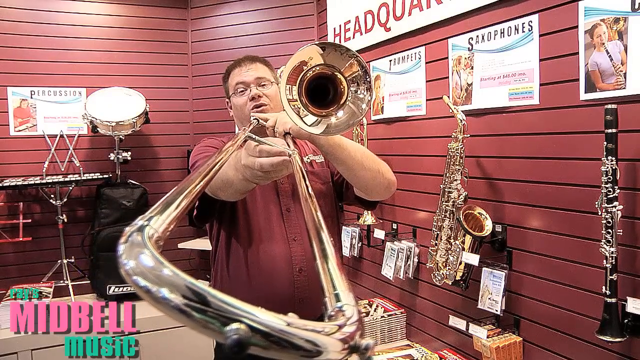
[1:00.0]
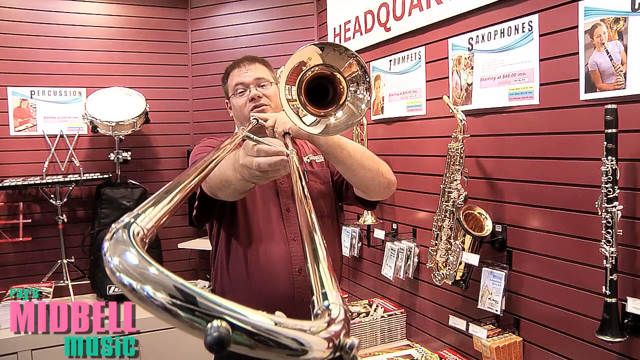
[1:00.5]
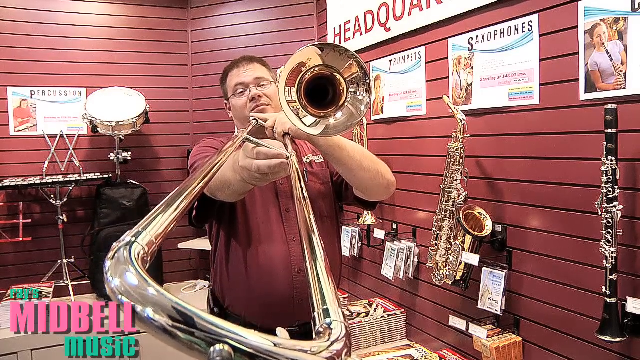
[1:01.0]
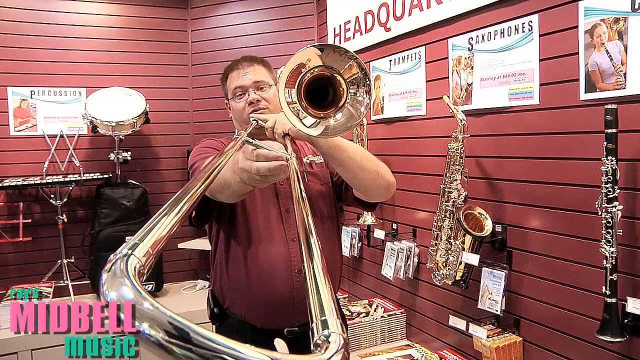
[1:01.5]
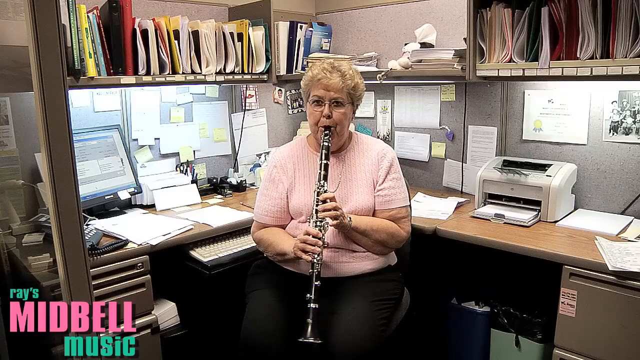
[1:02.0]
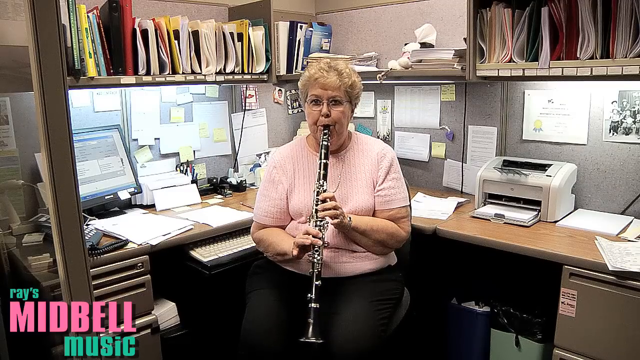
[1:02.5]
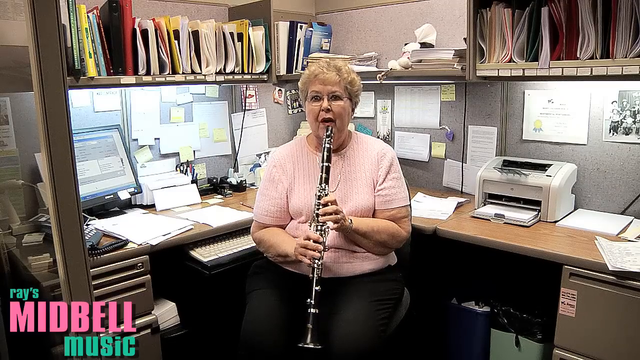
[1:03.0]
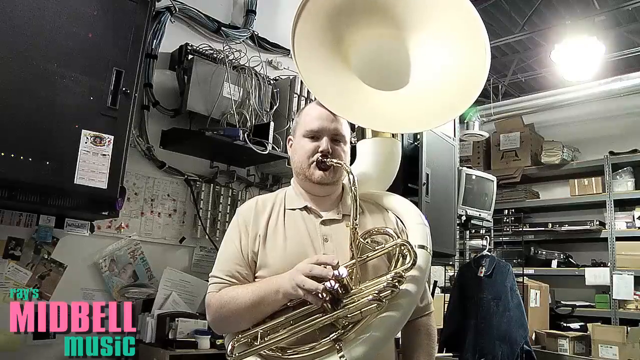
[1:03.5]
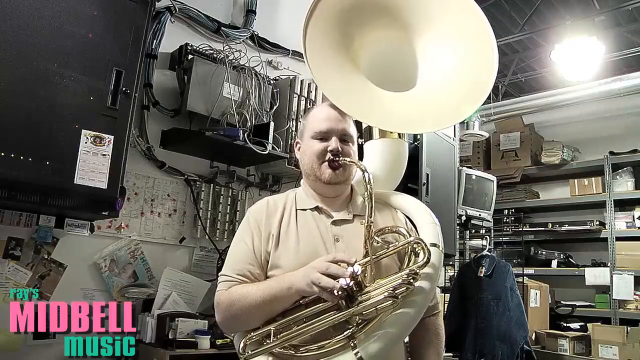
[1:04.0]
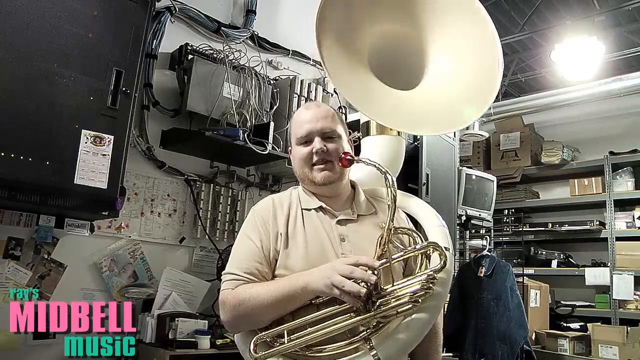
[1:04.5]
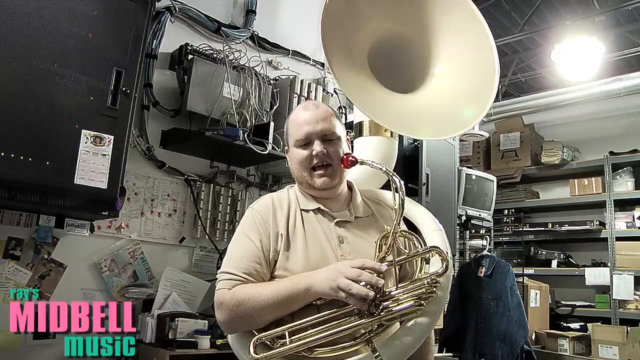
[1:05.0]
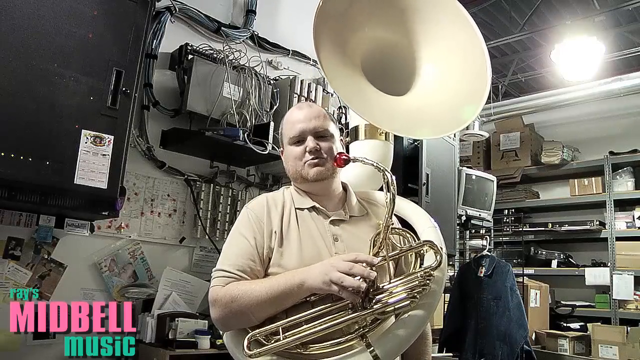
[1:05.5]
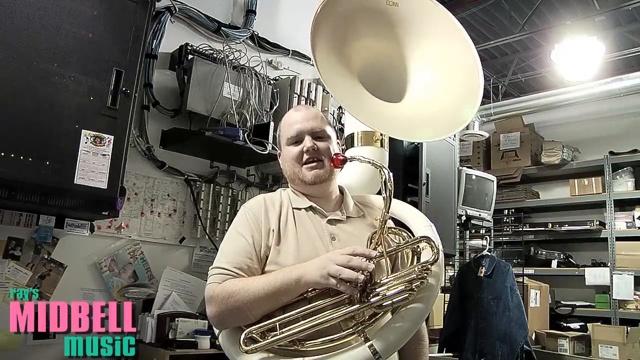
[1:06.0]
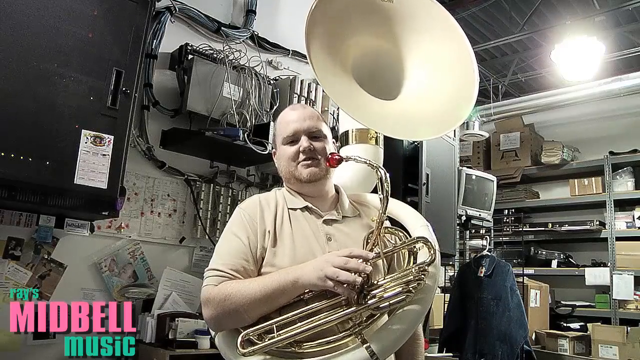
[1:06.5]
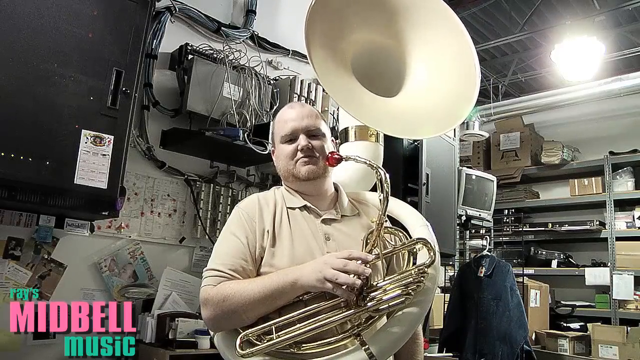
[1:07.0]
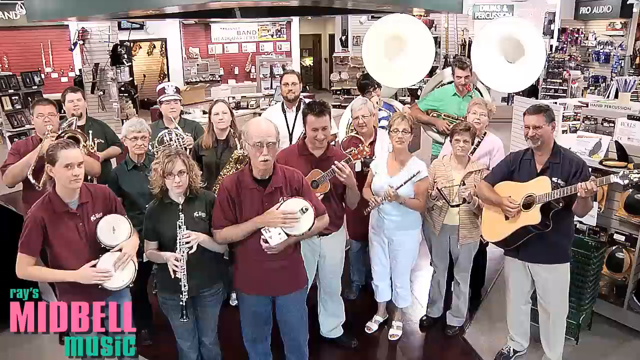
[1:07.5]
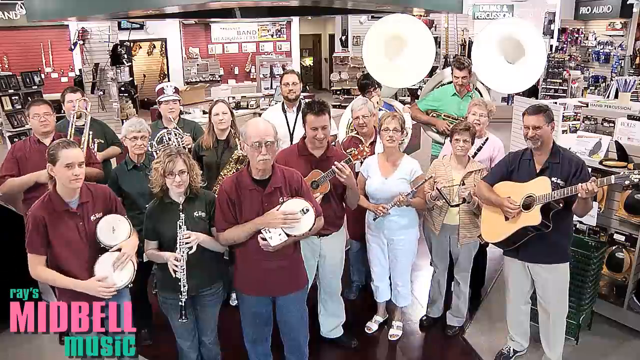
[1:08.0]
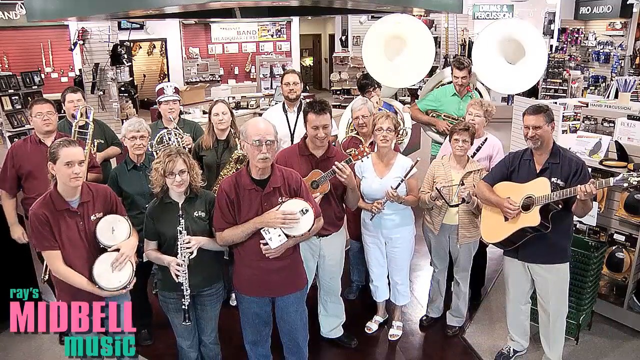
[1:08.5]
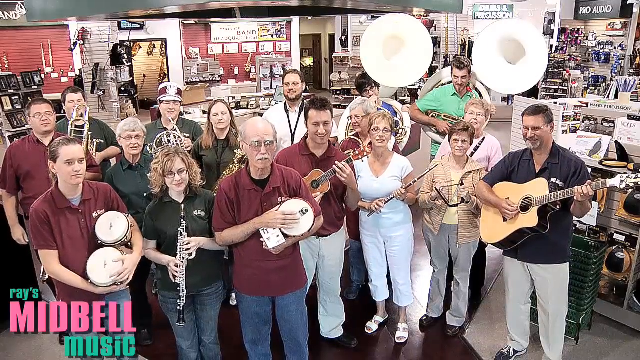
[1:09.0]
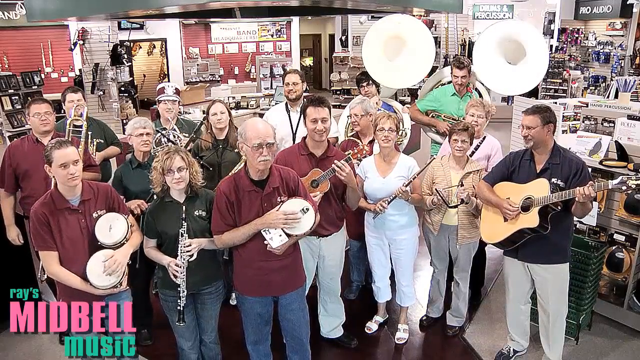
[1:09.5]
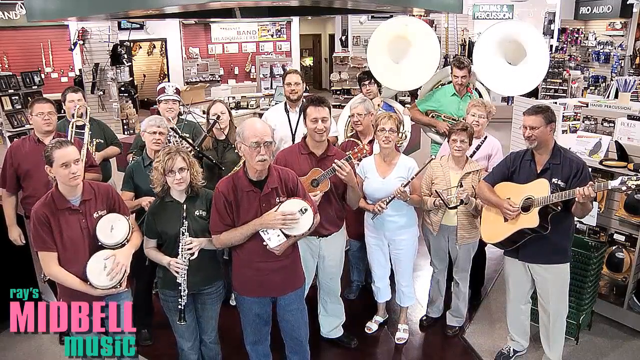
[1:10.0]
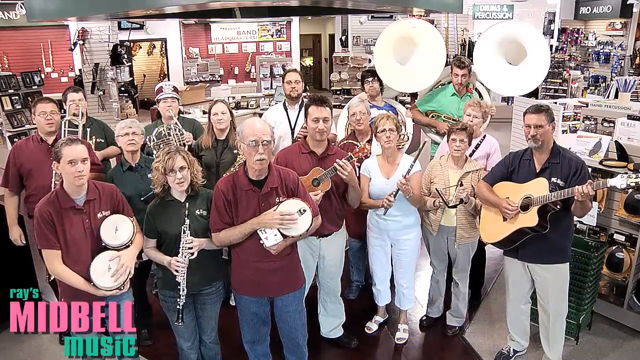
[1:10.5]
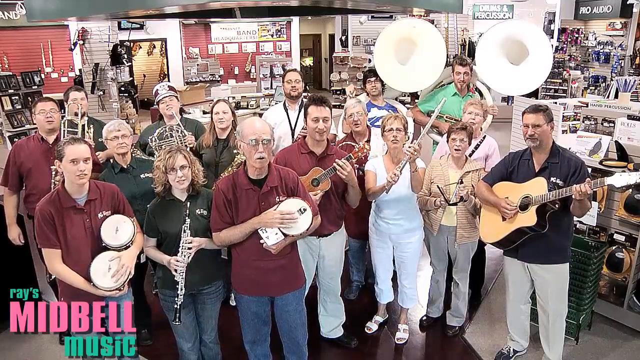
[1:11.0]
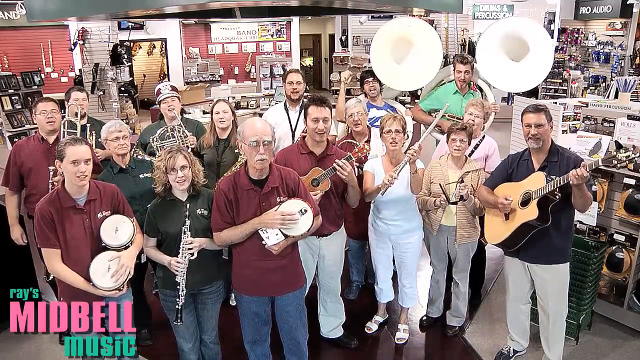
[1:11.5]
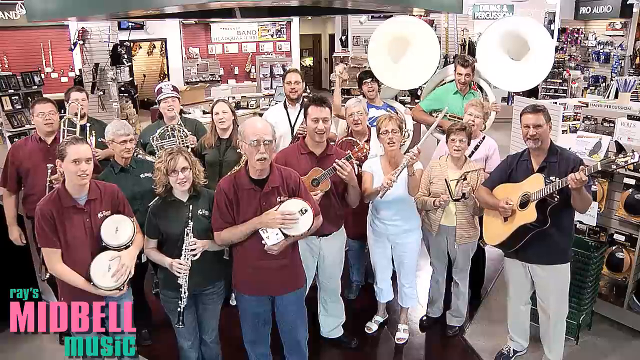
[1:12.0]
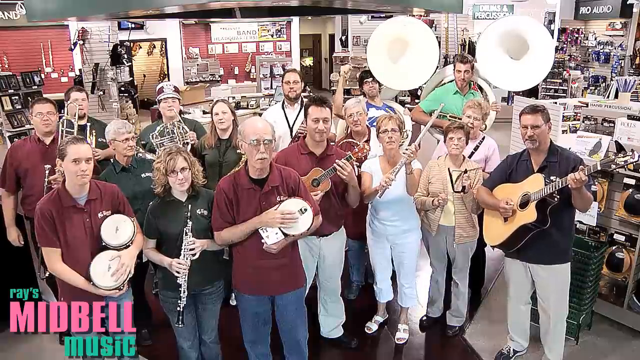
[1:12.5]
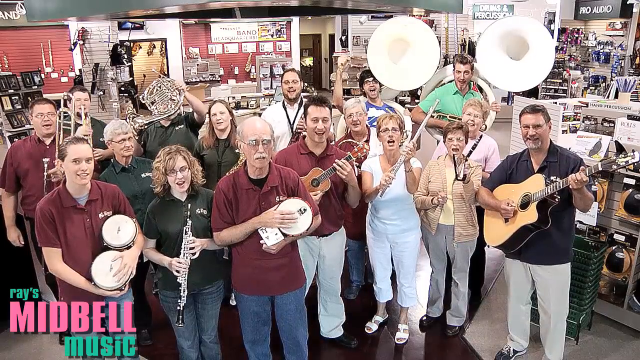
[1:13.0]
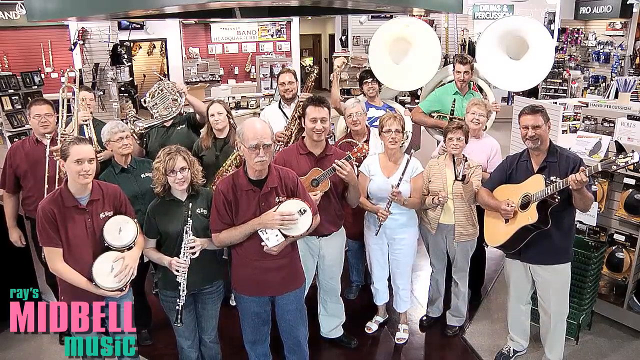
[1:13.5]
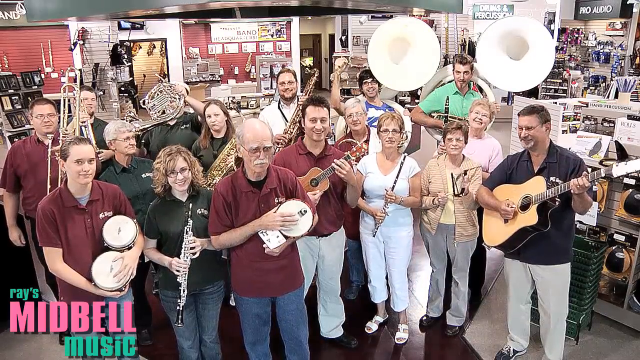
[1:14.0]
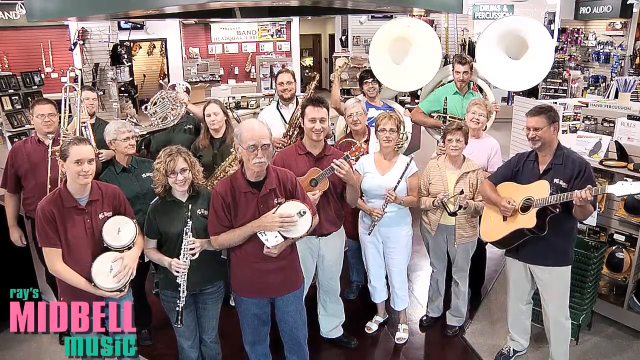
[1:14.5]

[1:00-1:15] The video returns to some earlier people and scenes. The woman at her desk is now just playing her clarinet. A man holding a trombone plays it for a second and then starts saying something. The scene changes to what looks like the employee shot: they all stand in front of the camera, which is kind of elevated, each holding their instruments and apparently saying something in unison. Finally, a quick pan moves towards some of the instruments displayed on one of the store's walls. All scenes appear to take place in different parts of the same Midbell store.